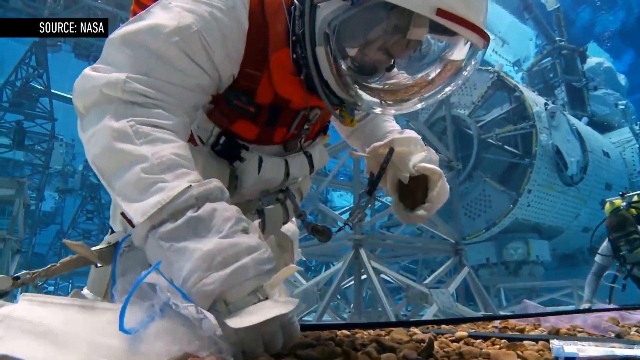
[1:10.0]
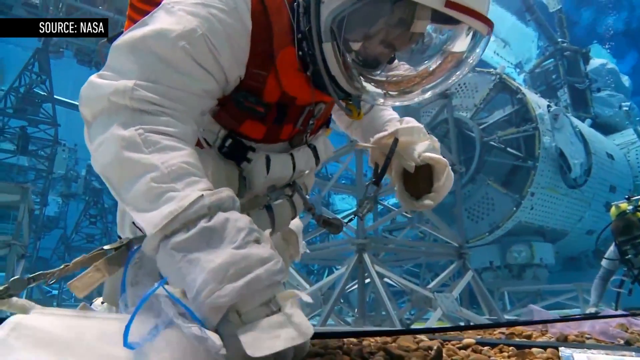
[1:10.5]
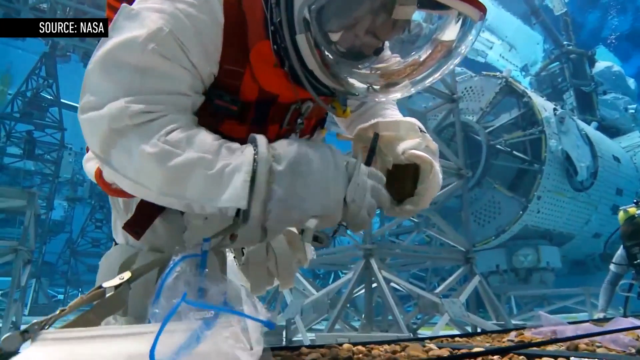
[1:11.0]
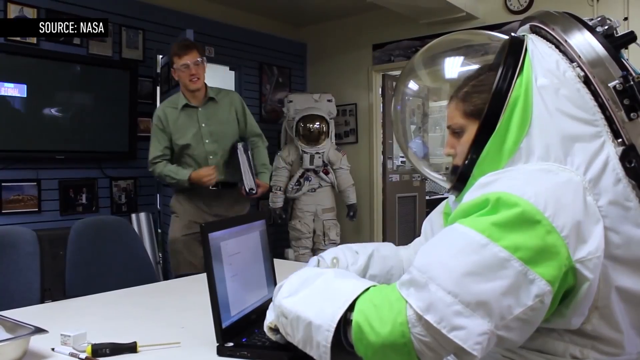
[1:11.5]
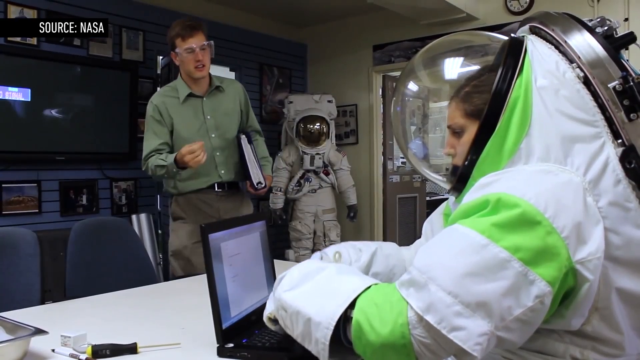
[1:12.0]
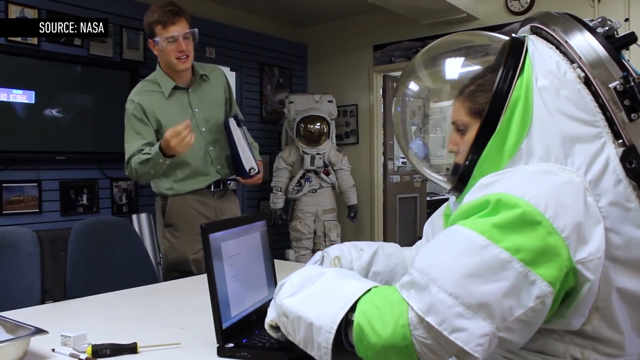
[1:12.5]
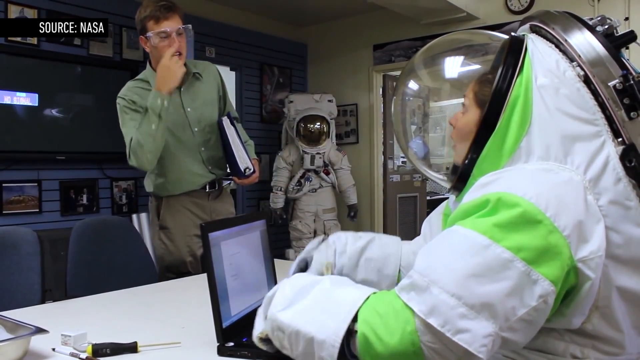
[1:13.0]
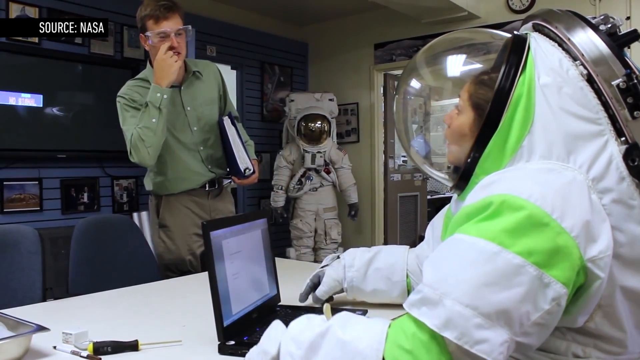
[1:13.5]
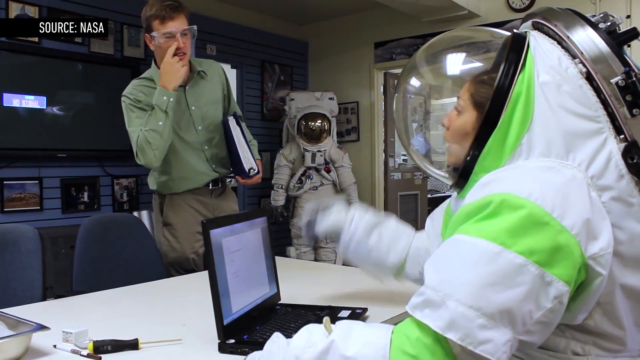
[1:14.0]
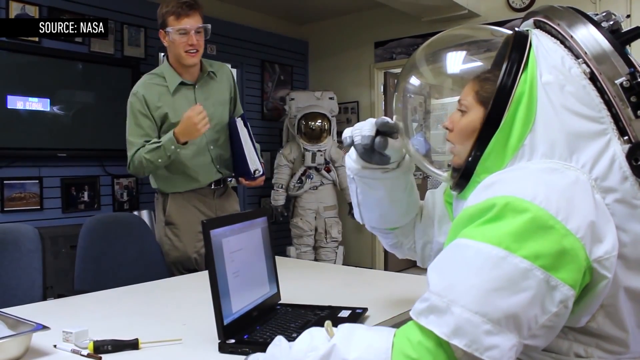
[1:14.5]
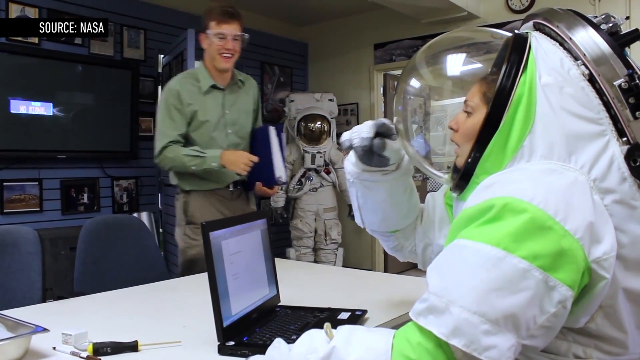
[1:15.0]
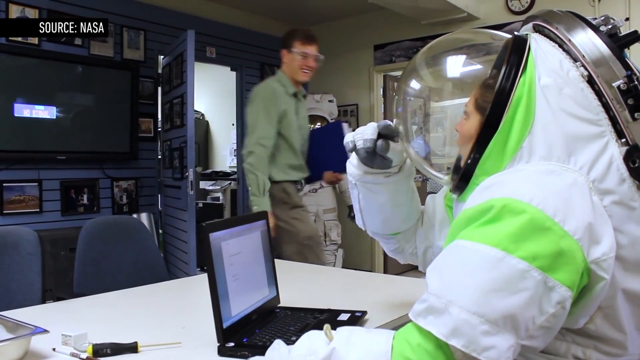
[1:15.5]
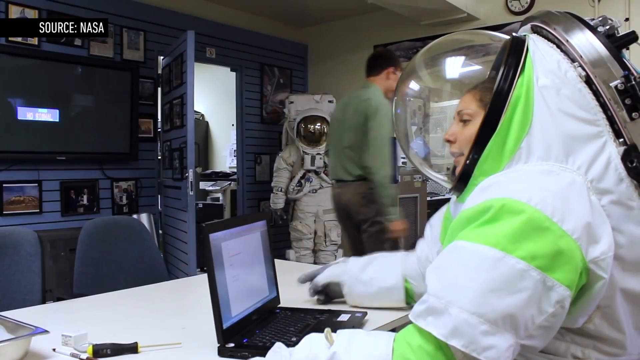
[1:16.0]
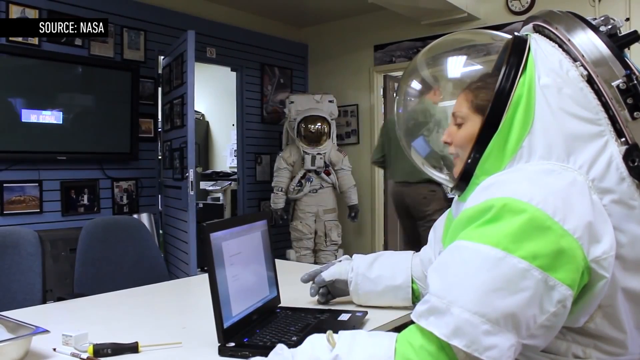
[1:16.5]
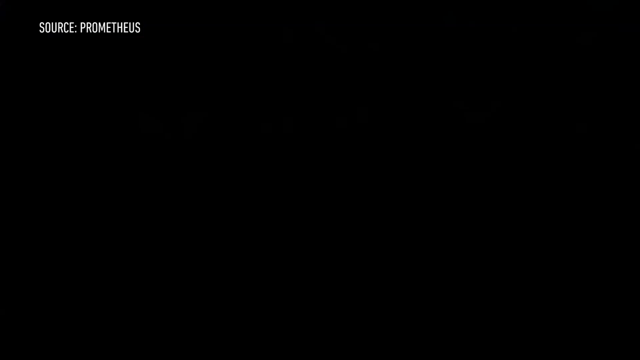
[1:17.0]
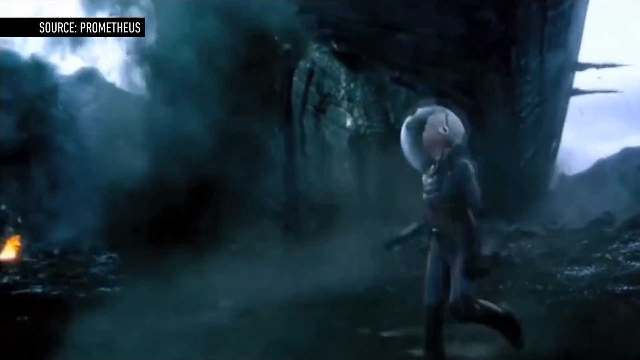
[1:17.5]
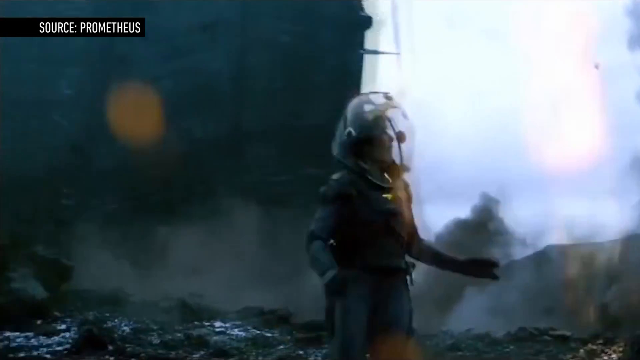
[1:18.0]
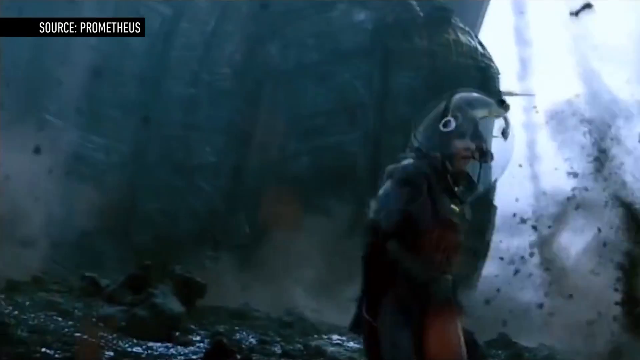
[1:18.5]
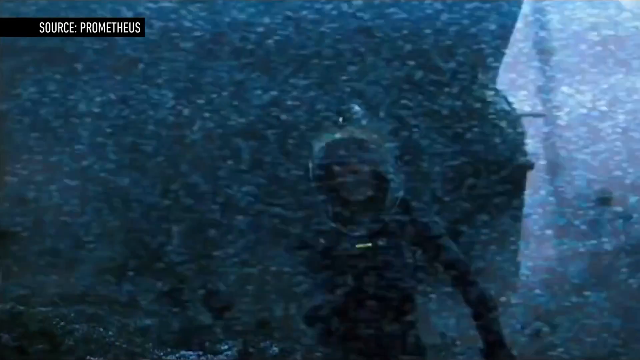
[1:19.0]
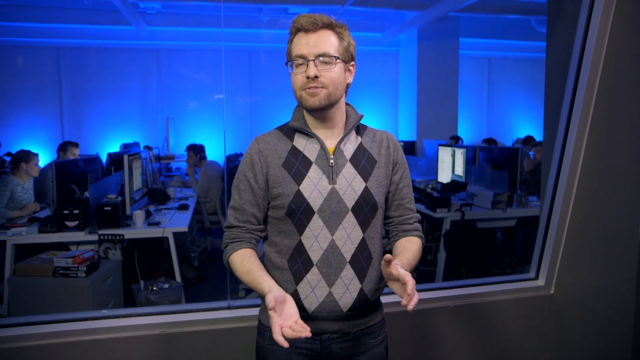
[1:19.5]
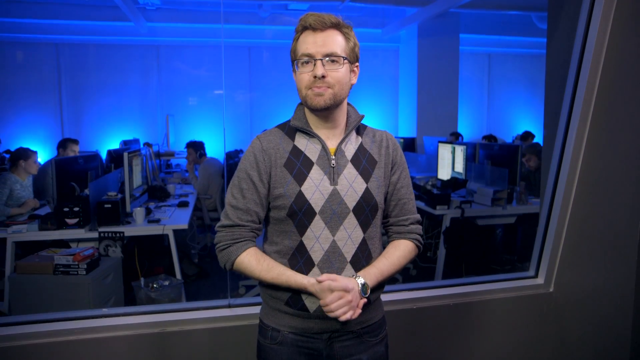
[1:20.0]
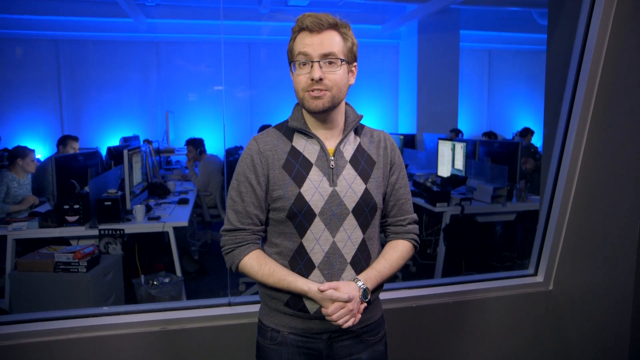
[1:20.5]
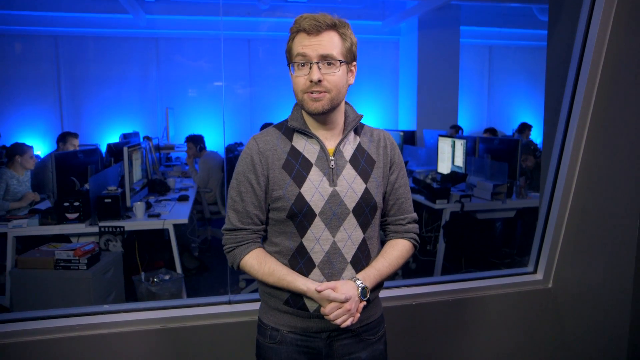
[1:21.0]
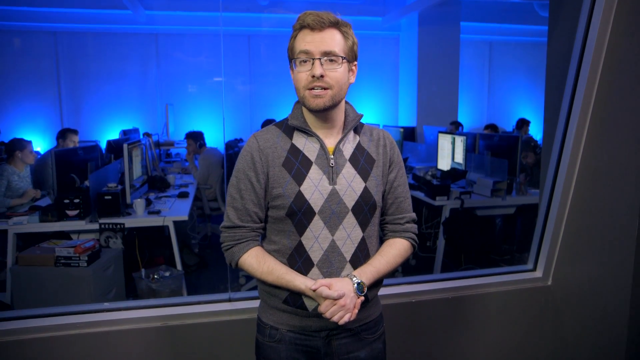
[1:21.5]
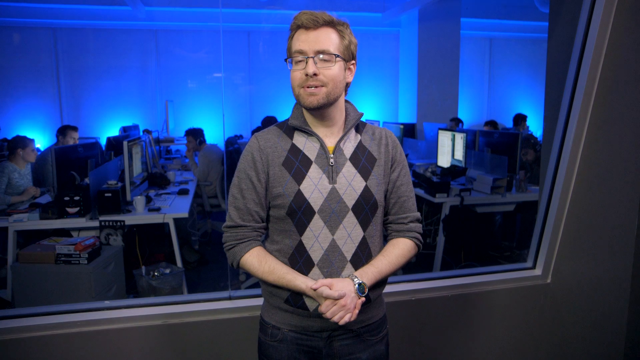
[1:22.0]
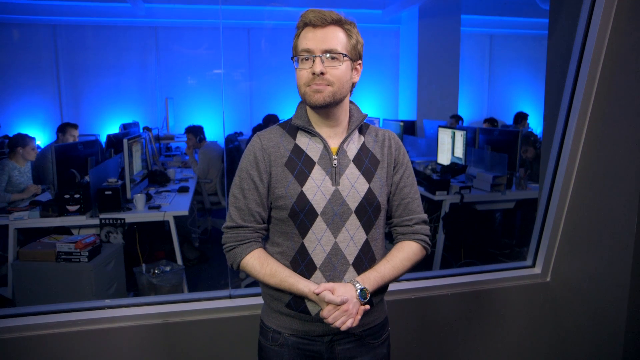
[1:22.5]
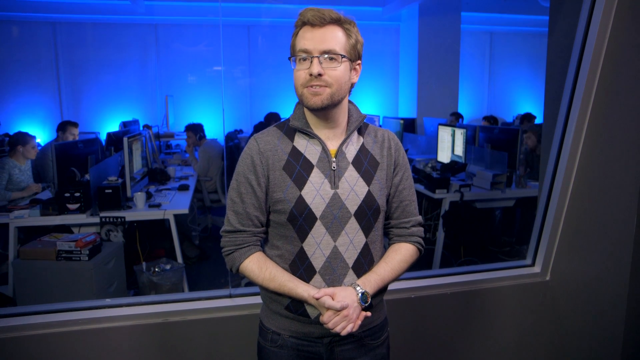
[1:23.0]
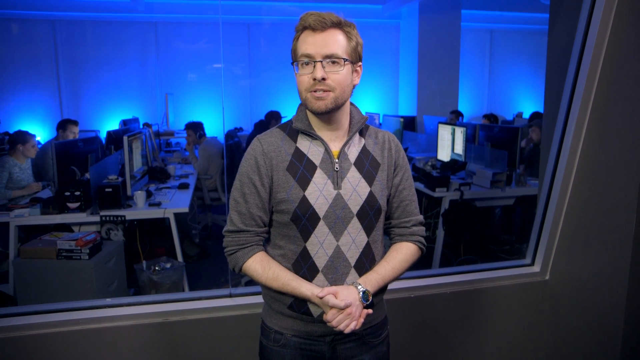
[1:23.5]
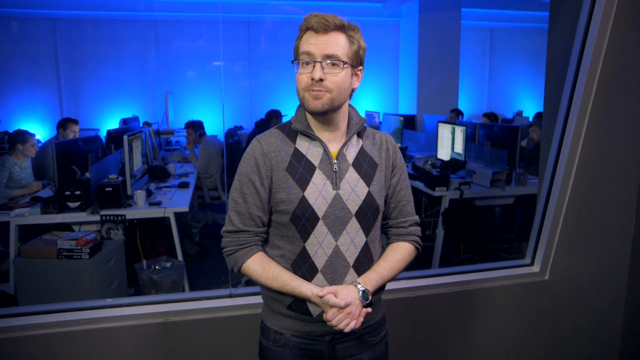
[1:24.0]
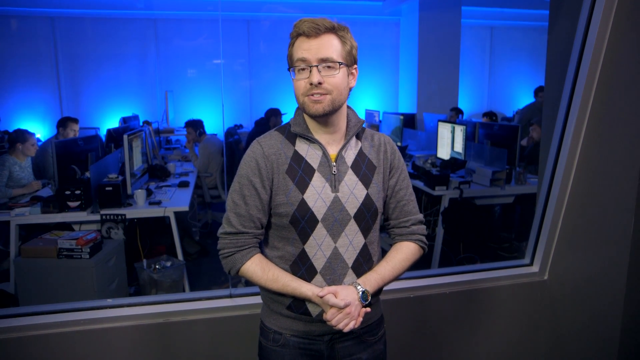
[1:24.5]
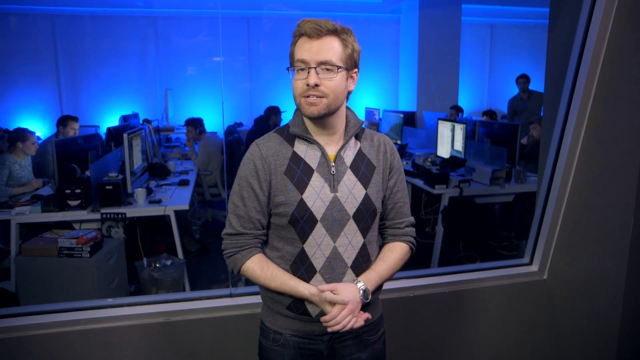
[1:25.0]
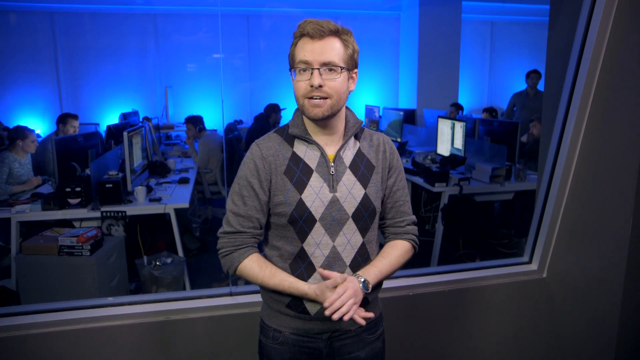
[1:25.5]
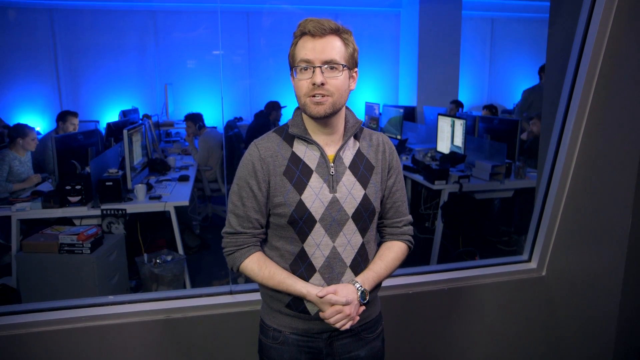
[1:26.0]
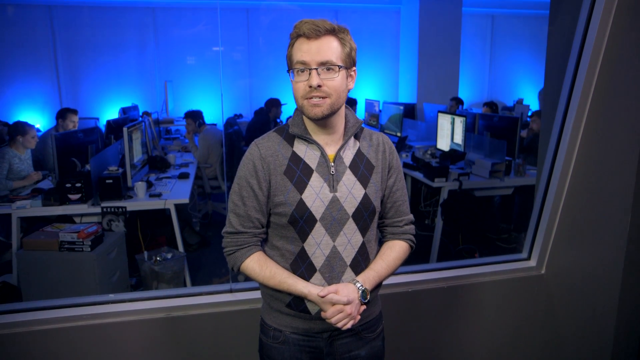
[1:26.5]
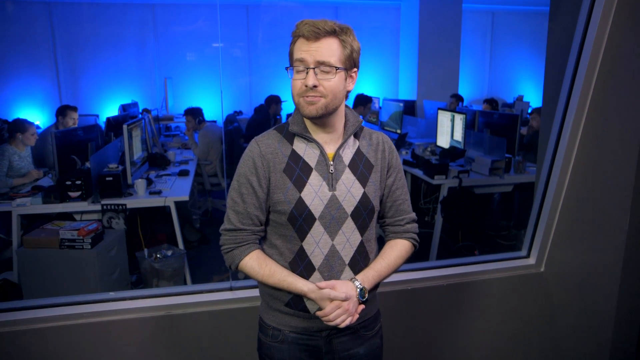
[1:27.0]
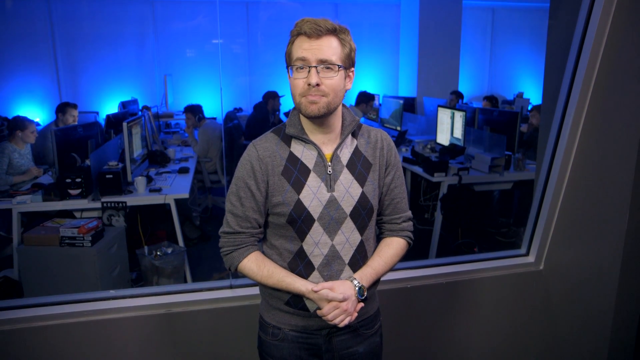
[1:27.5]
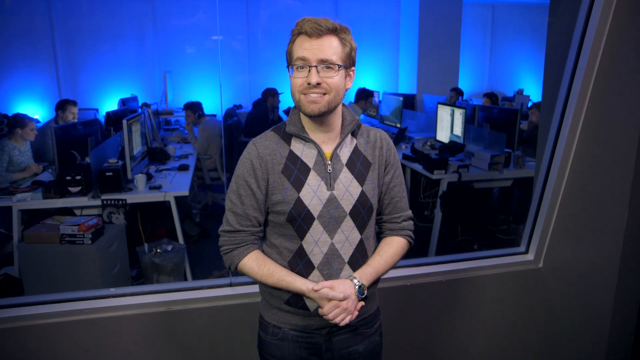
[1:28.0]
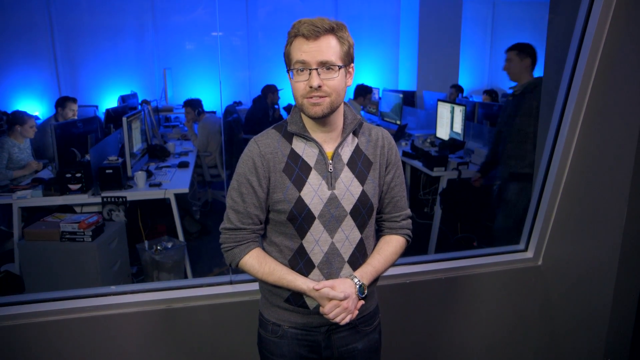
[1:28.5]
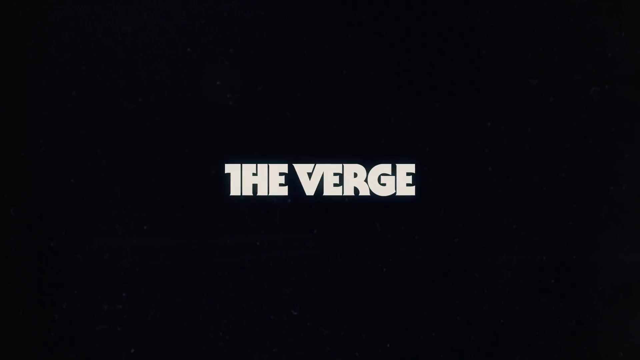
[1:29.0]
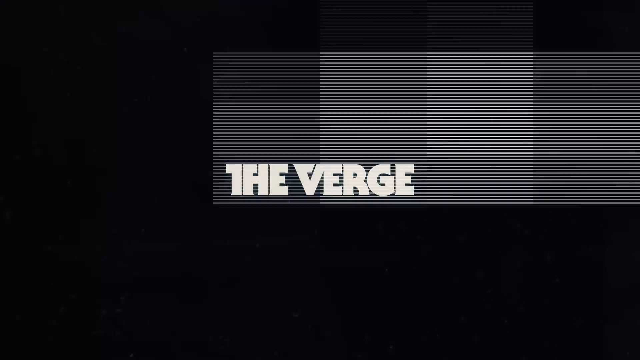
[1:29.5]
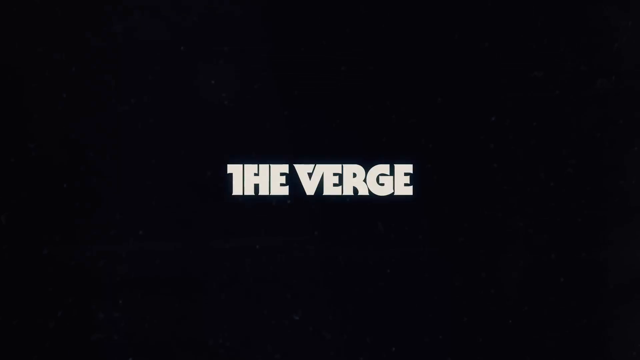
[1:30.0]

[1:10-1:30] The same astronaut continues working with the plants under the sea, which are still hard to identify. The video then shows a woman astronaut working on her laptop while wearing the suit seen at the beginning. A man dressed in green approaches her holding a folder full of sheets in his left hand and says, as a joke, that something is in her nose; the woman tries to scratch it, but because of the glass helmet she apparently cannot. The man laughs as he leaves the office. For a second, a clip from the movie Prometheus shows a spaceship beginning to fall on top of one of the protagonists, who is about to leave. Finally, Miller, the host, closes the video before the channel name "The Verge" appears on screen.